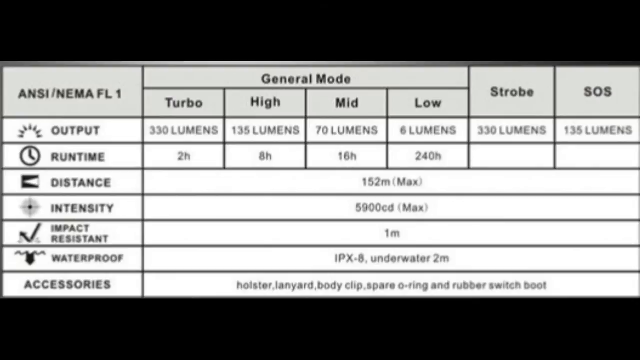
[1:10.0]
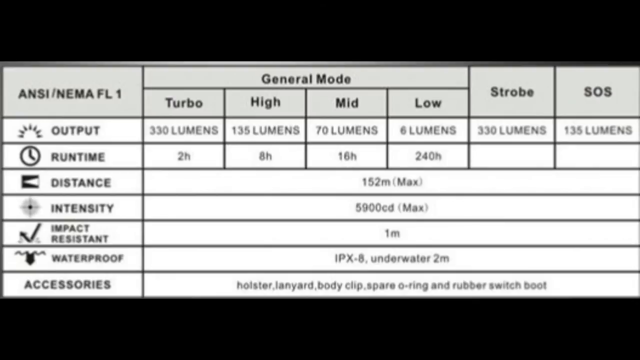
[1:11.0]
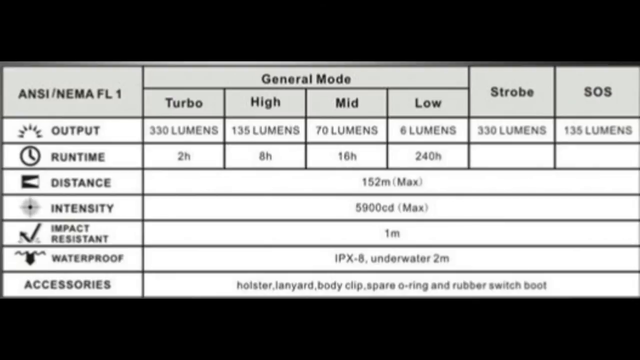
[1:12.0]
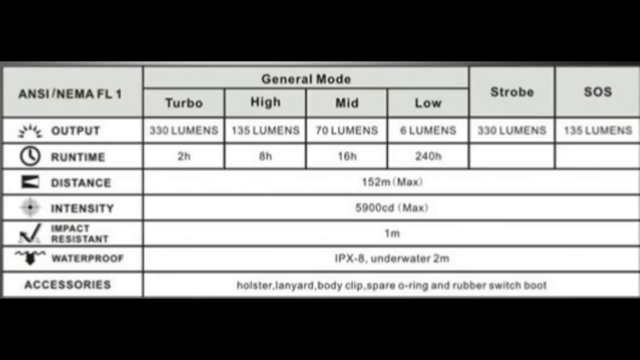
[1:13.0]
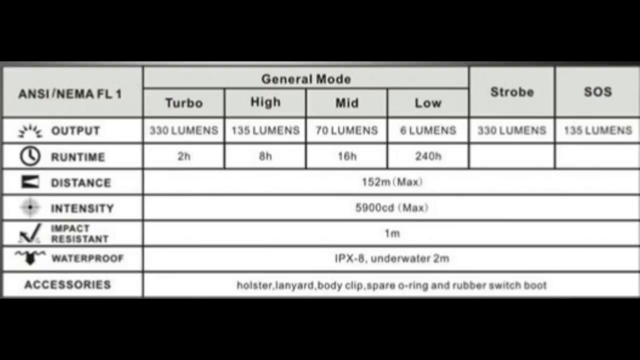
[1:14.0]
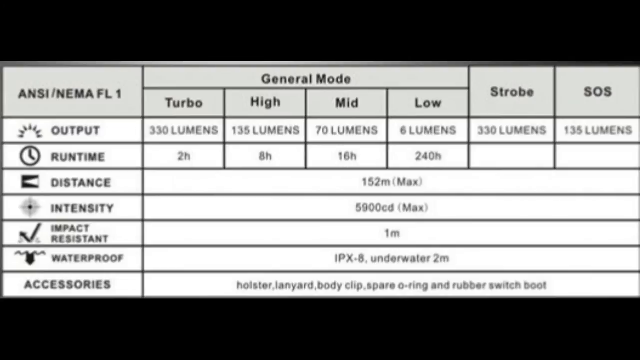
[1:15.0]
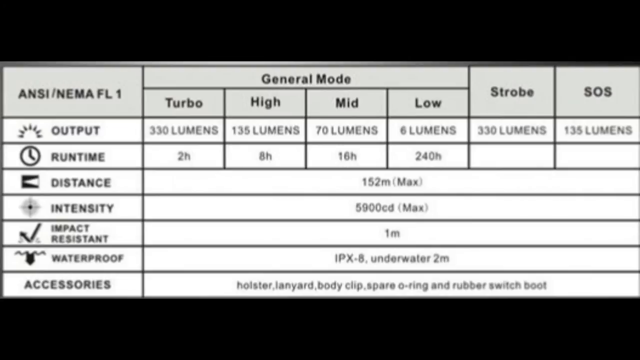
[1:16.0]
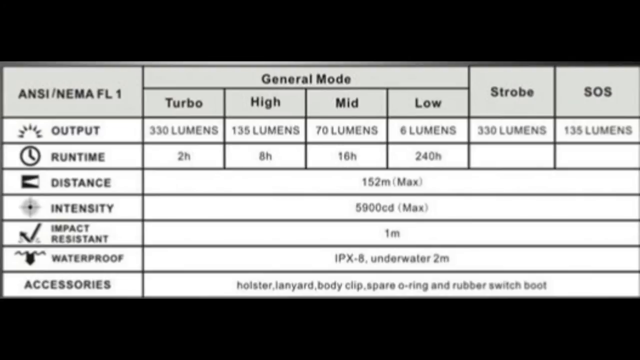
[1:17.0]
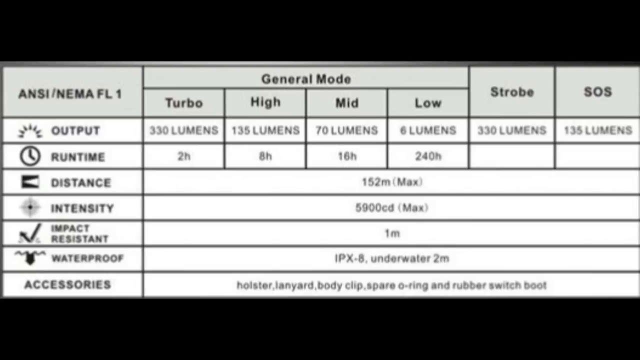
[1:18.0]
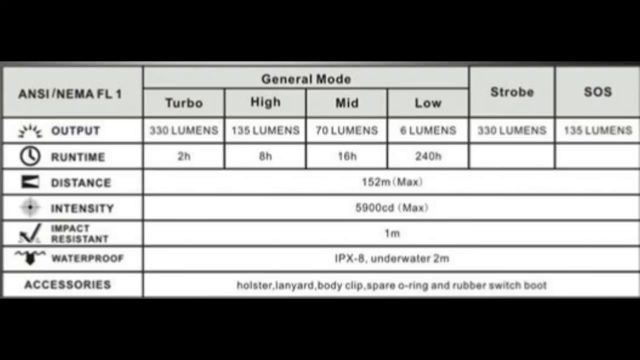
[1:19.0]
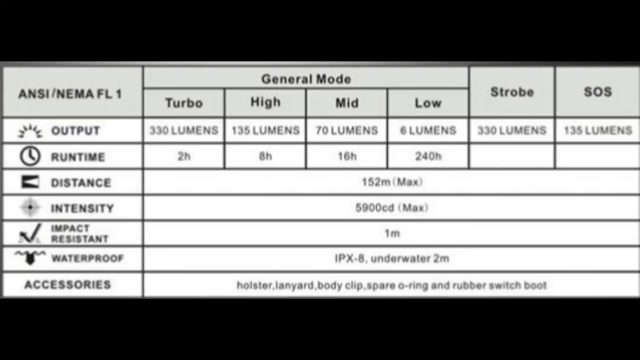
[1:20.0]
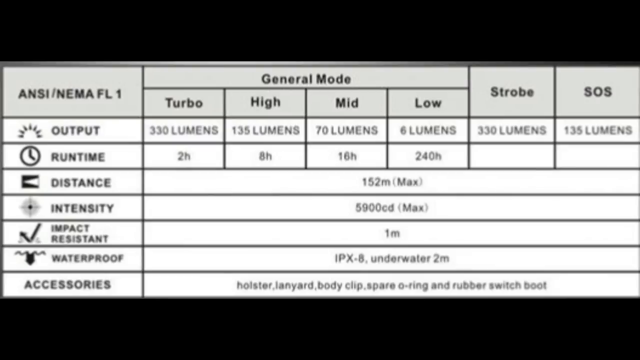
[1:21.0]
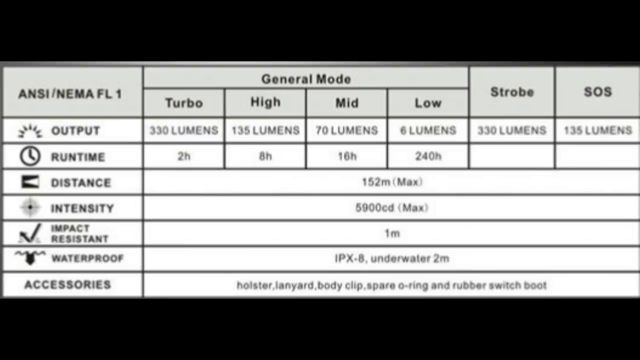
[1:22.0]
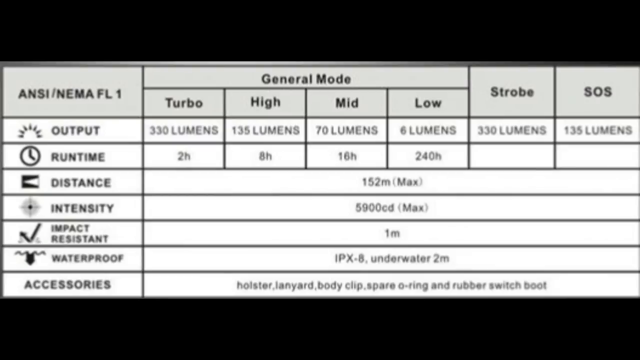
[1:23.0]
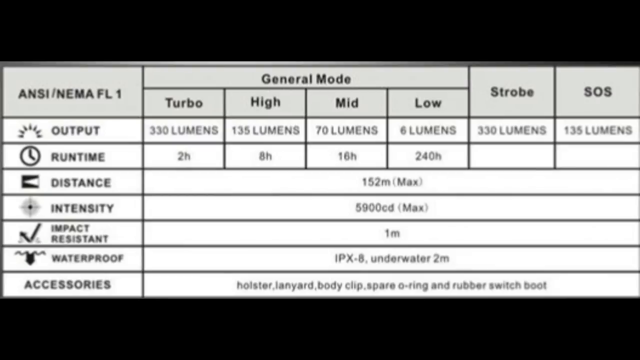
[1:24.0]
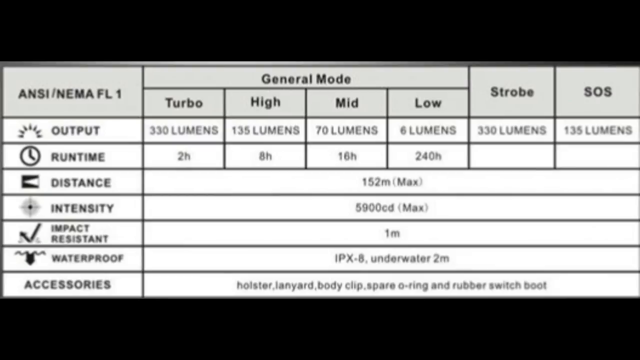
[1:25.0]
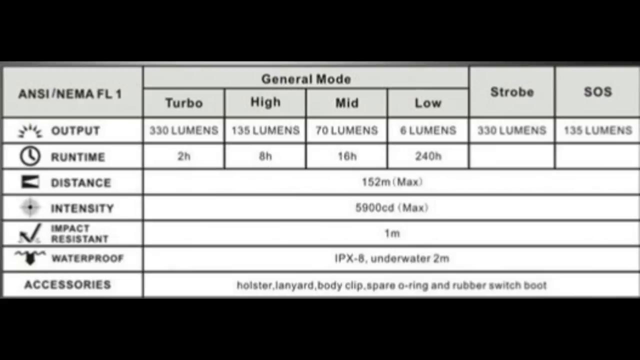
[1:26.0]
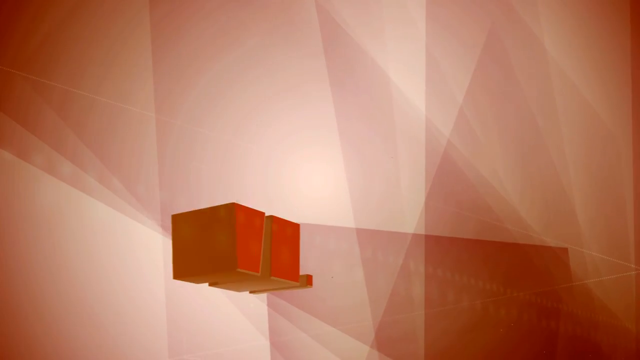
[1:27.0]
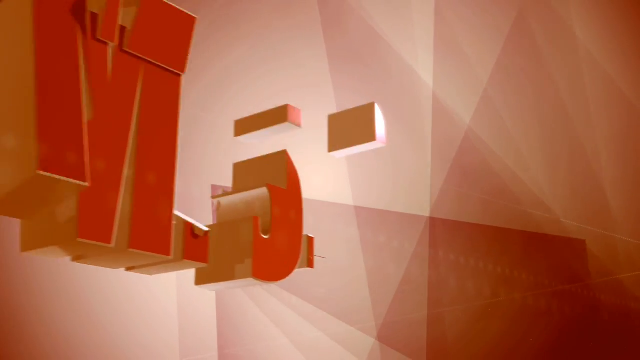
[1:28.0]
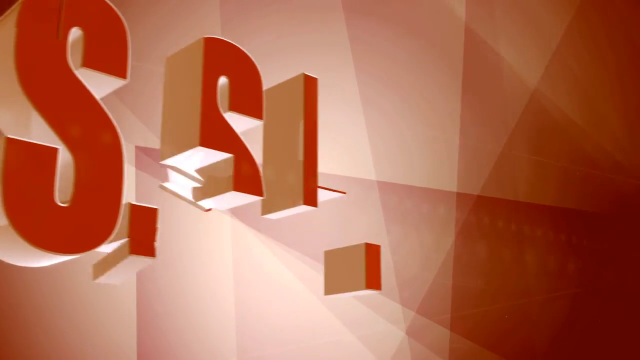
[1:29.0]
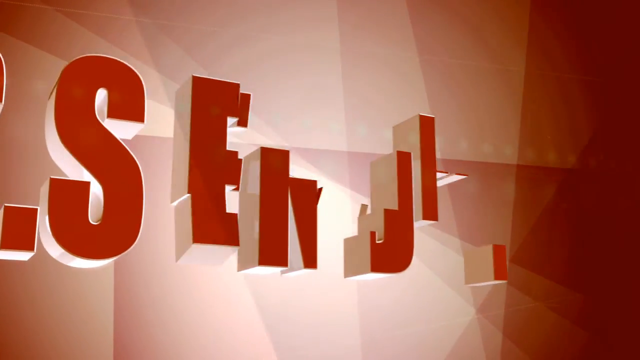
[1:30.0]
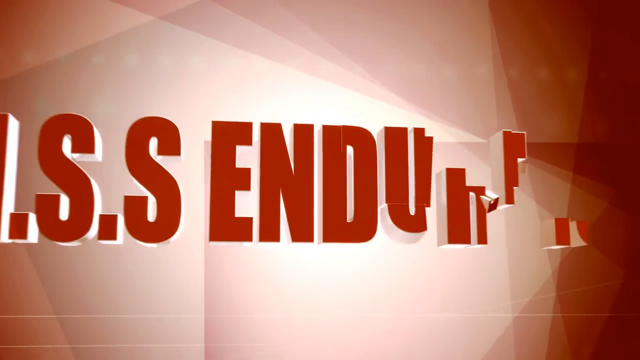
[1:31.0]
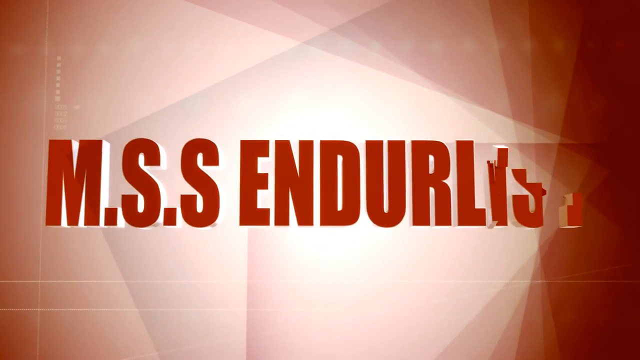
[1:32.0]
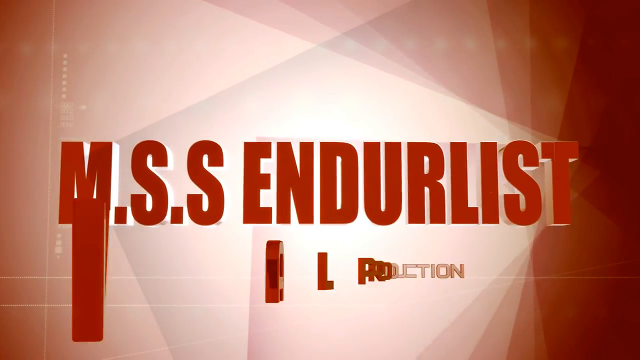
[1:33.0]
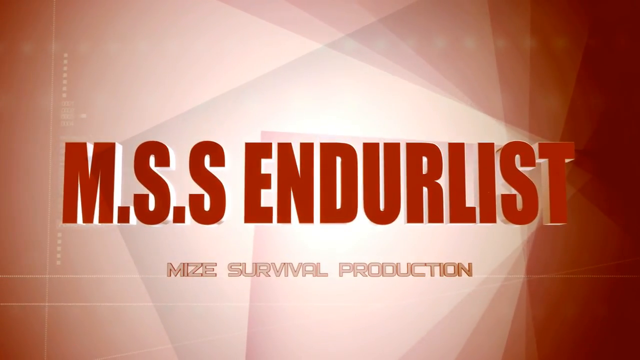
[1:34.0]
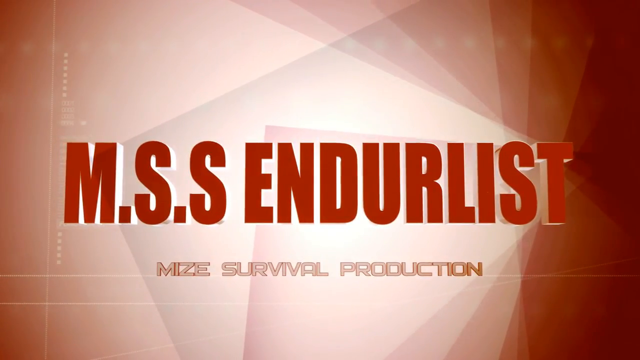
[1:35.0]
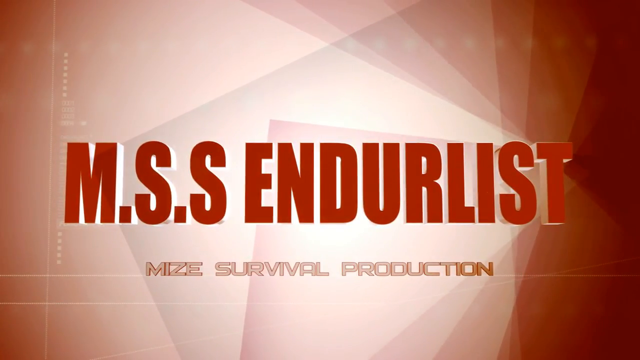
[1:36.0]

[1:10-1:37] A white chart appears against a black background. The left column lists categories of specifications for a device: output, runtime, distance, intensity, impact-resistant, waterproof, and accessories. The rows on the right give the specifications for each; for example, the distance is 152 m max, the intensity is 5900 CD max, and accessories include holster, lanyard, body clip, spare o-ring and rubber switch boot. As this fades, a red and white end title screen appears, with a background that looks like geometric shapes in these colors that appear to move slightly, and a bright white center. Text appears letter by letter, each letter appearing to form on the screen, reading "M.S.S Endurlist." Below it, "Mize Survival Production" appears as the letters seem to move into the screen one by one.